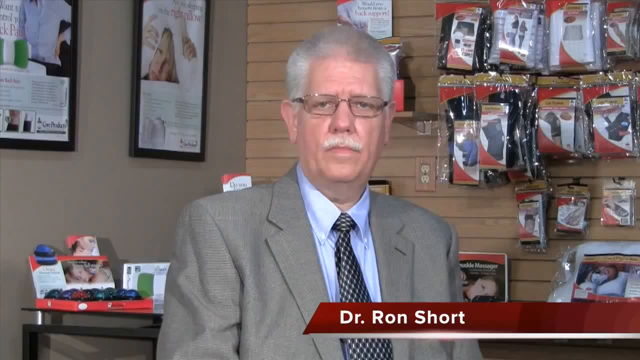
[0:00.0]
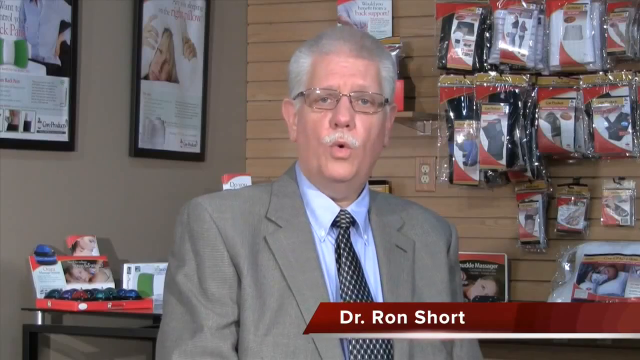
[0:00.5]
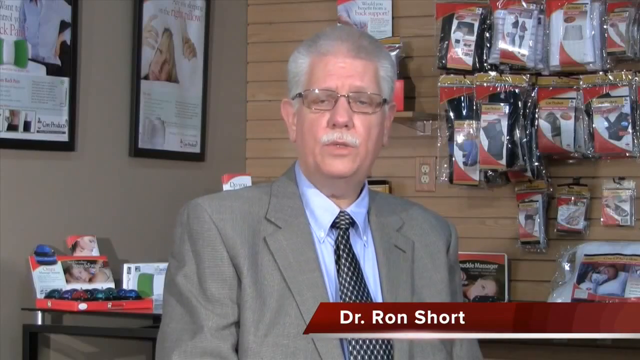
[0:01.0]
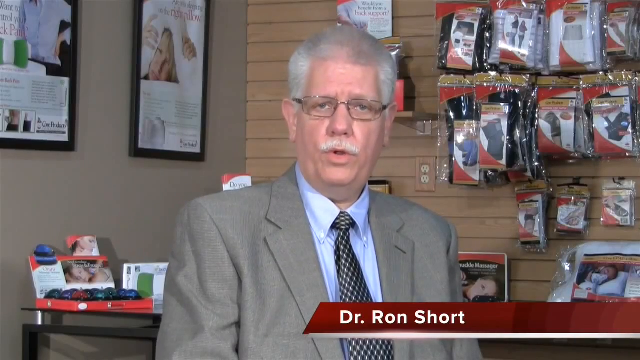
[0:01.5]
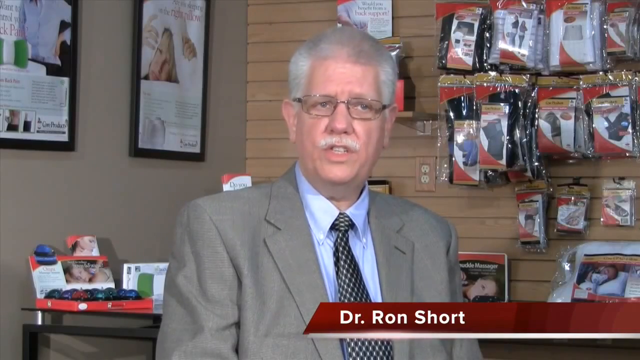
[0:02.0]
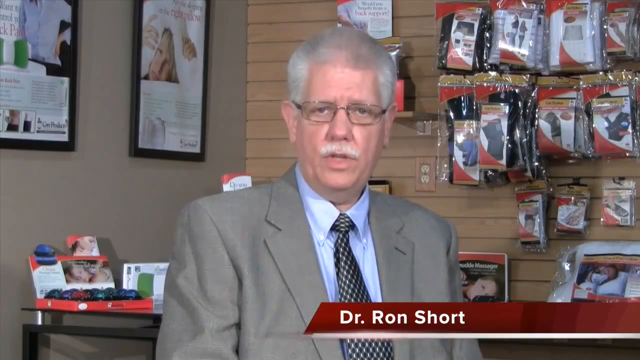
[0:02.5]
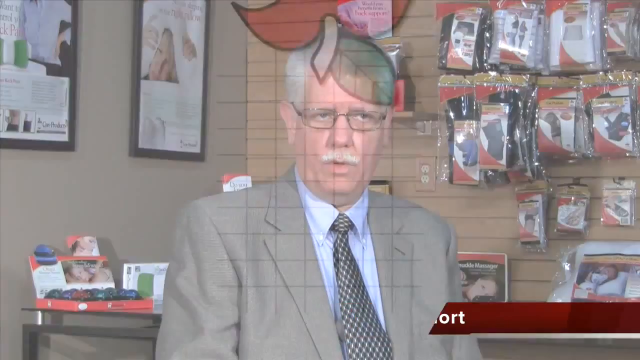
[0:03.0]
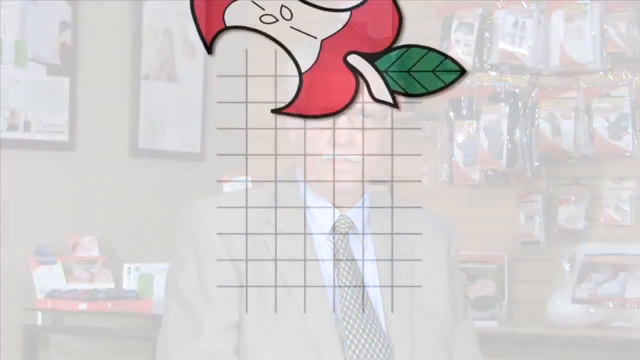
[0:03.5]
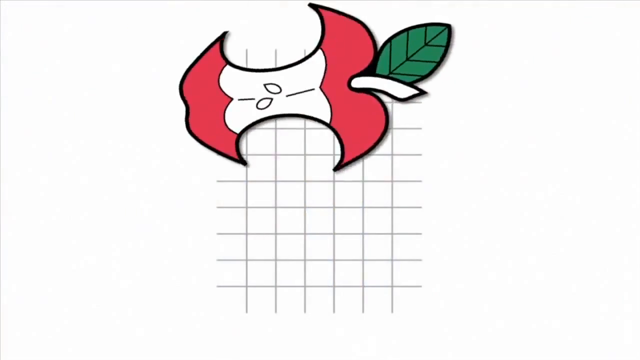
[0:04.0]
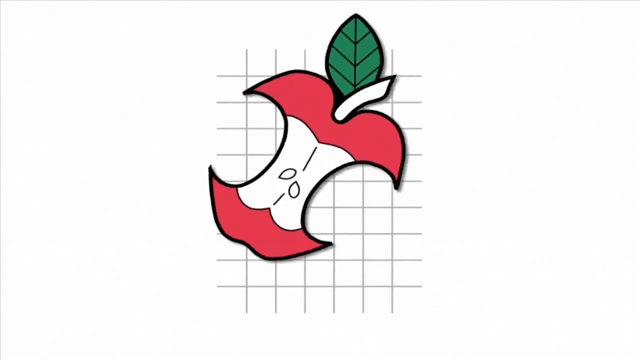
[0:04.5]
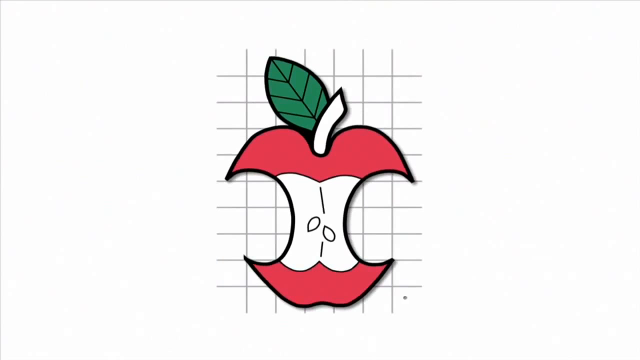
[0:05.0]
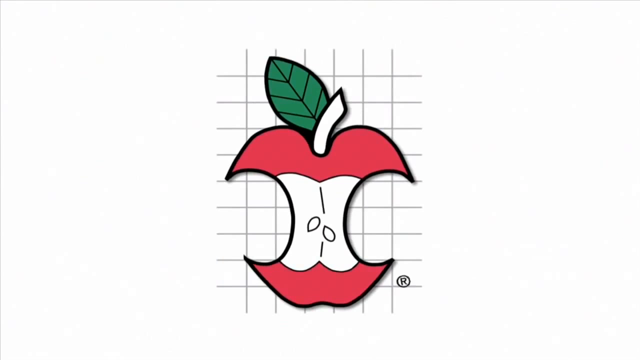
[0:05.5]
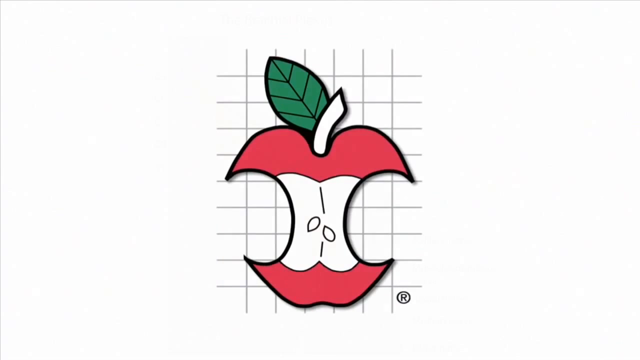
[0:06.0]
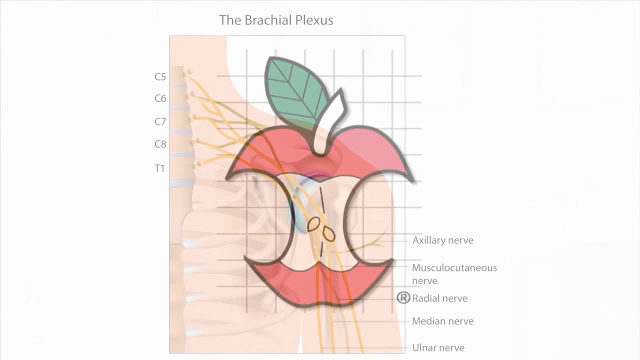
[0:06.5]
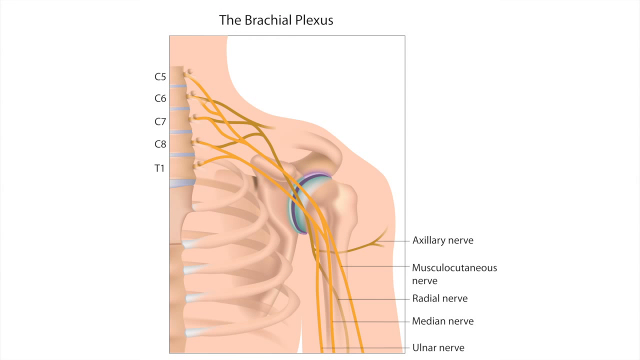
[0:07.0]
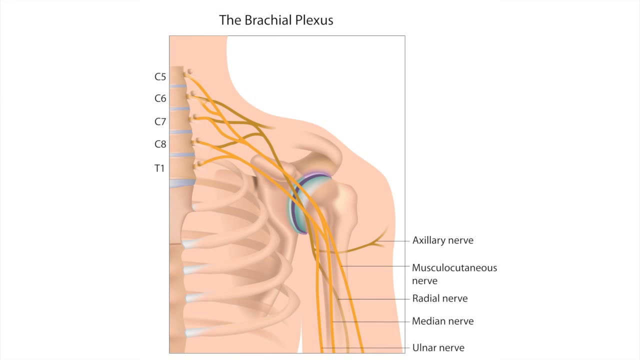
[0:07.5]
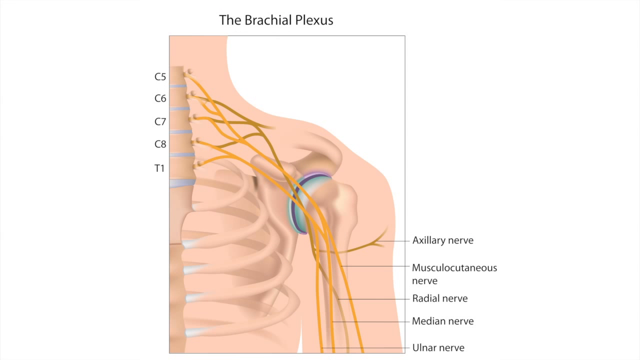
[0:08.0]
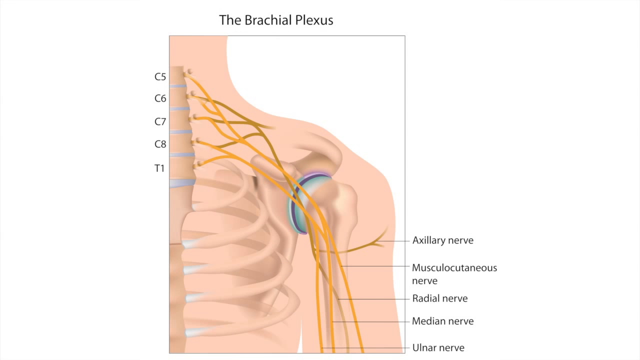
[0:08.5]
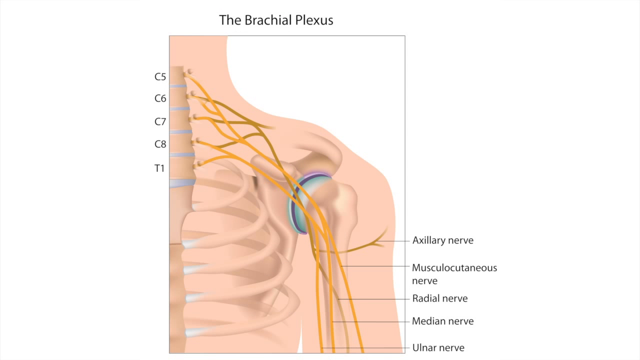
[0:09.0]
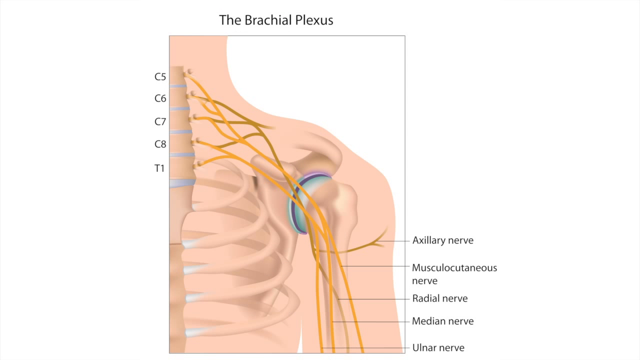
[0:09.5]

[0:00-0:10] A man wearing glasses, a suit and a necktie talks into the camera. Bags of different products are directly behind him, and a red label pops up below him that says "Dr. Ron Short." The video then cuts to a mostly white screen where an apple pops up that looks like it has been bitten on both sides. Next comes what looks to be a skeletal system, labeled in different areas.